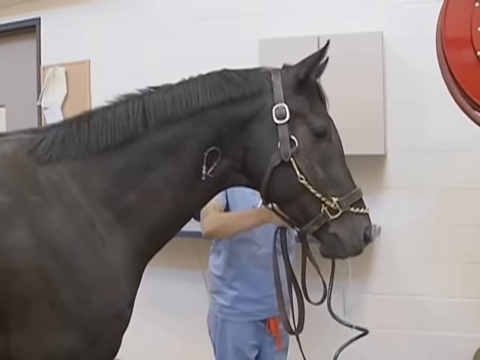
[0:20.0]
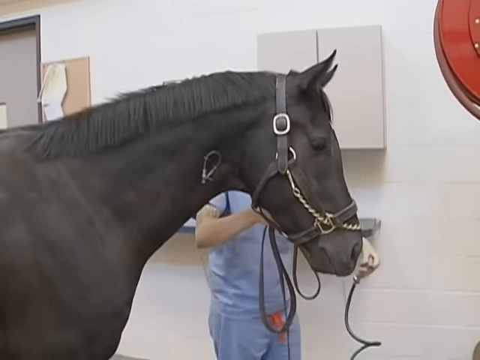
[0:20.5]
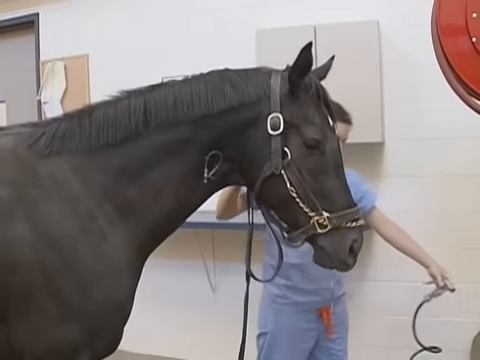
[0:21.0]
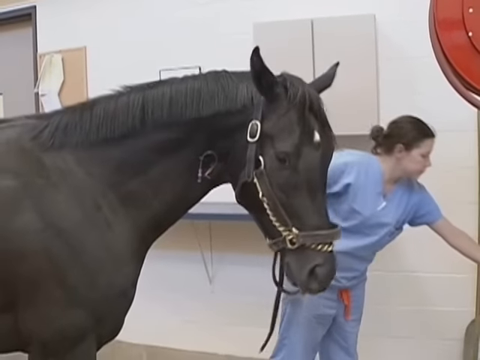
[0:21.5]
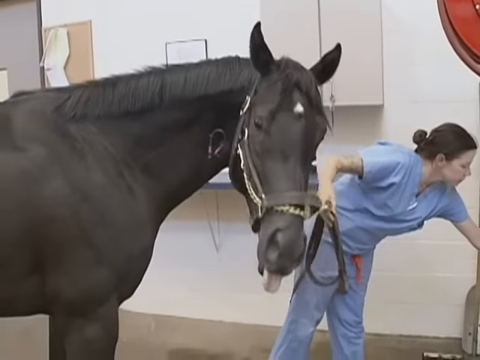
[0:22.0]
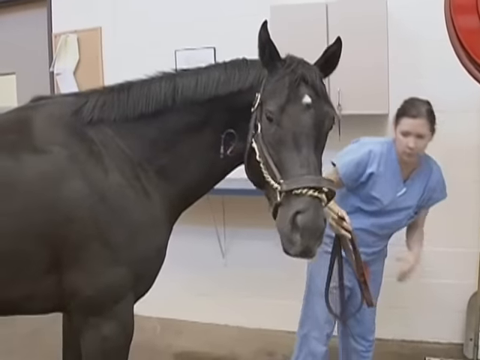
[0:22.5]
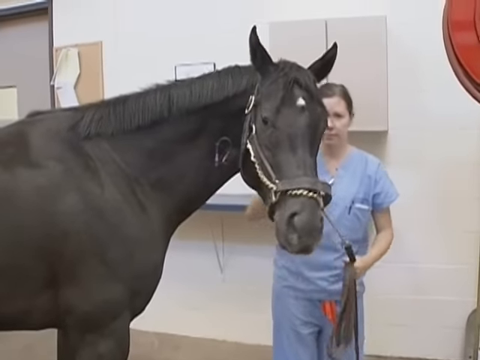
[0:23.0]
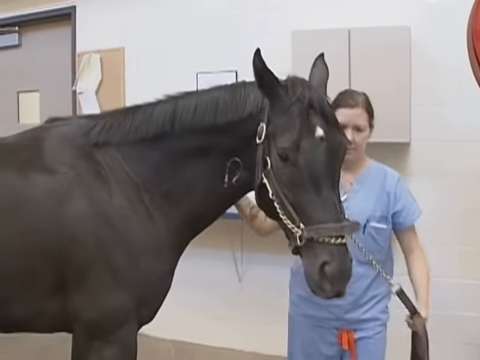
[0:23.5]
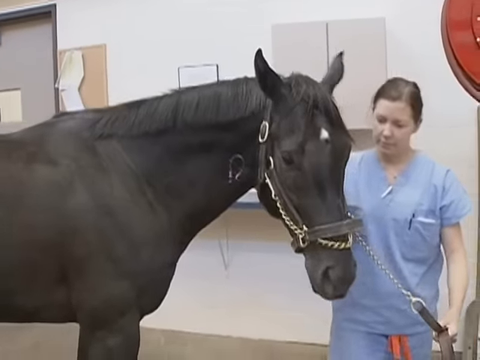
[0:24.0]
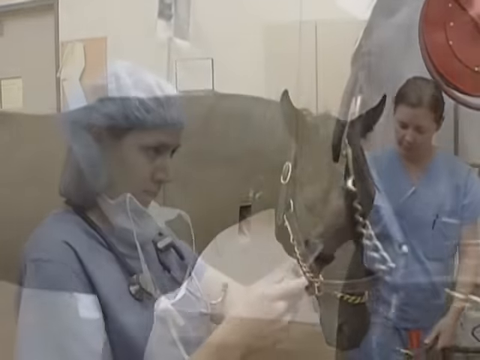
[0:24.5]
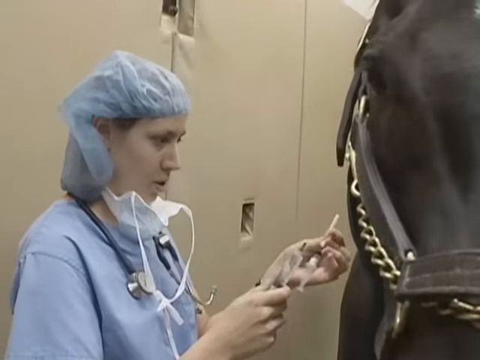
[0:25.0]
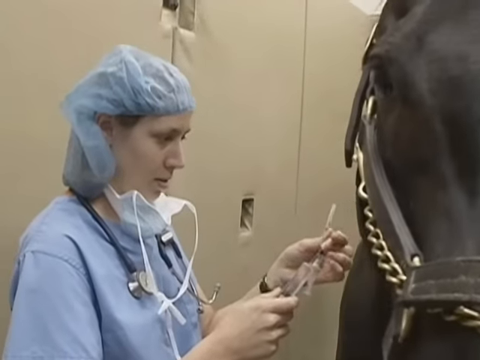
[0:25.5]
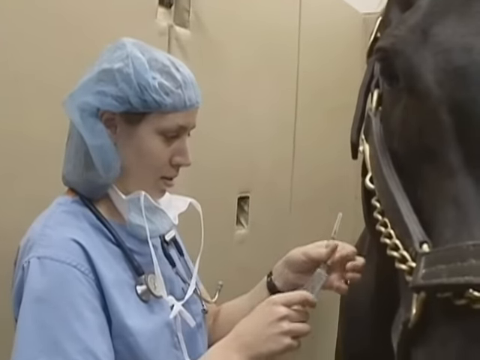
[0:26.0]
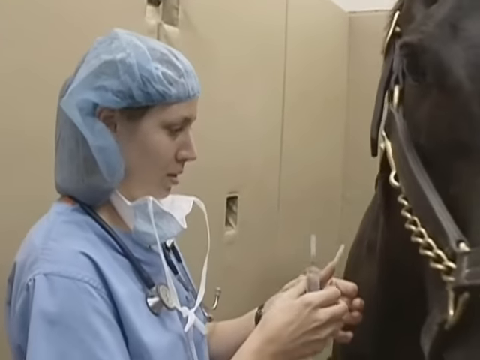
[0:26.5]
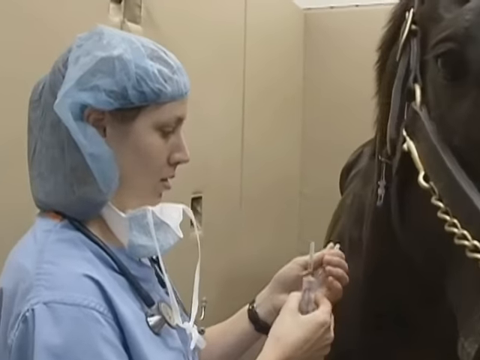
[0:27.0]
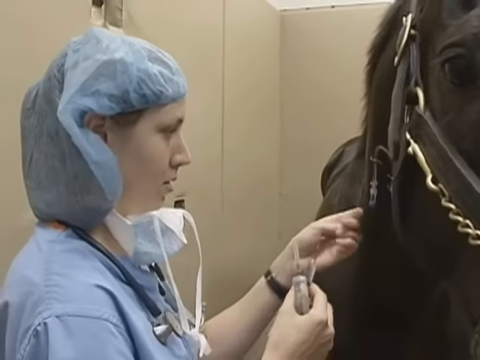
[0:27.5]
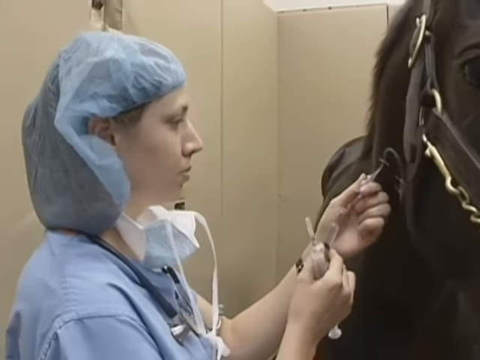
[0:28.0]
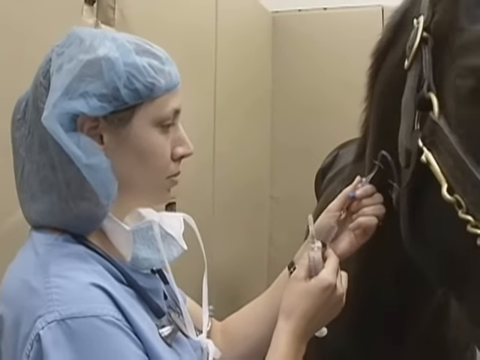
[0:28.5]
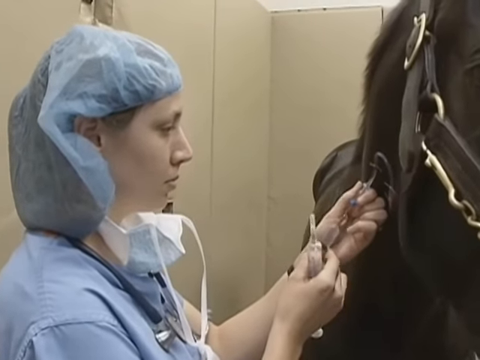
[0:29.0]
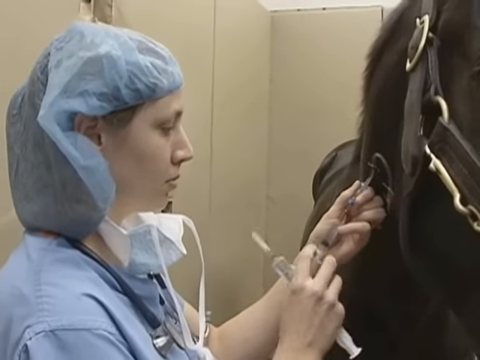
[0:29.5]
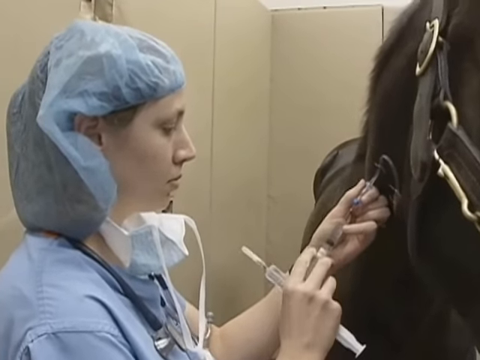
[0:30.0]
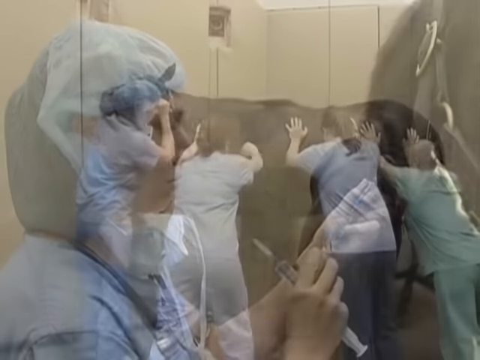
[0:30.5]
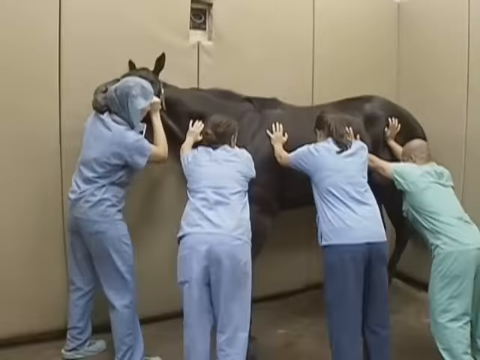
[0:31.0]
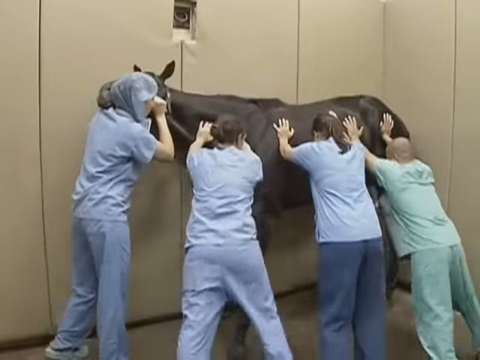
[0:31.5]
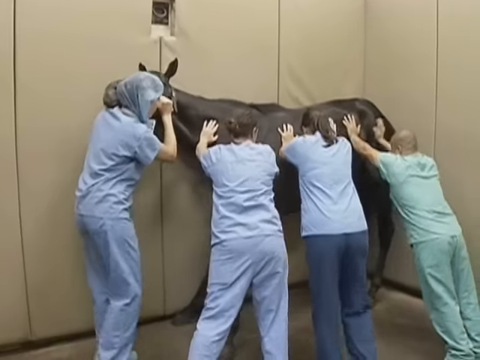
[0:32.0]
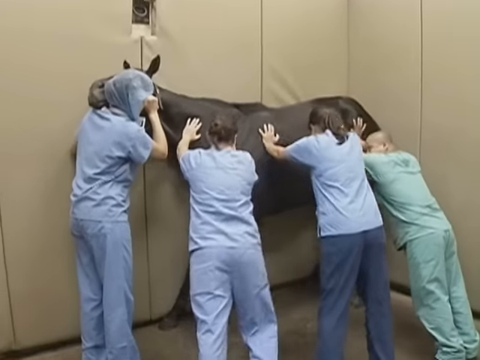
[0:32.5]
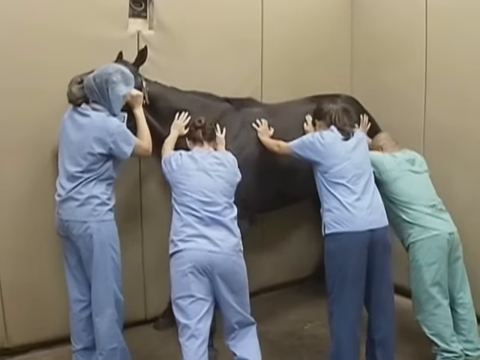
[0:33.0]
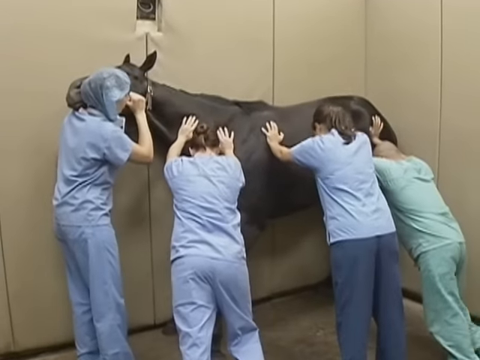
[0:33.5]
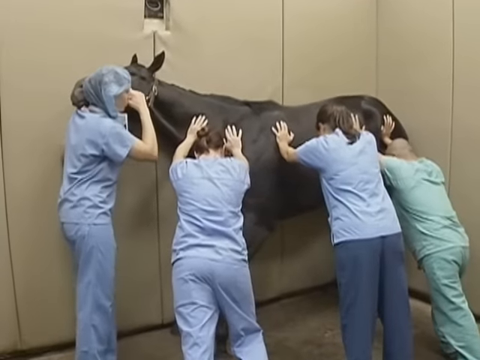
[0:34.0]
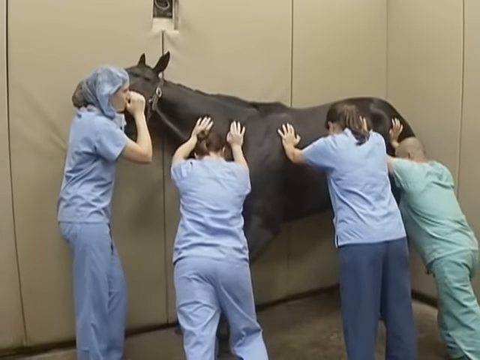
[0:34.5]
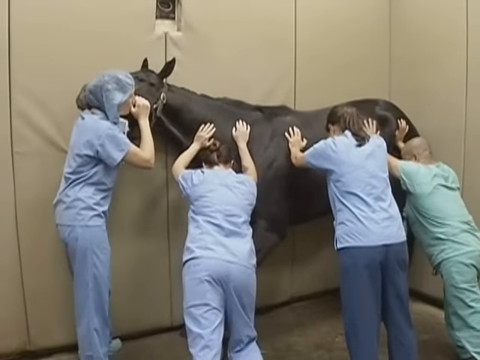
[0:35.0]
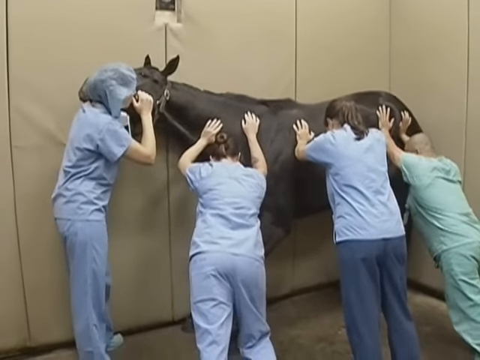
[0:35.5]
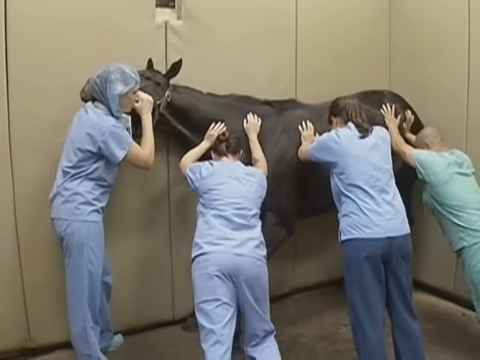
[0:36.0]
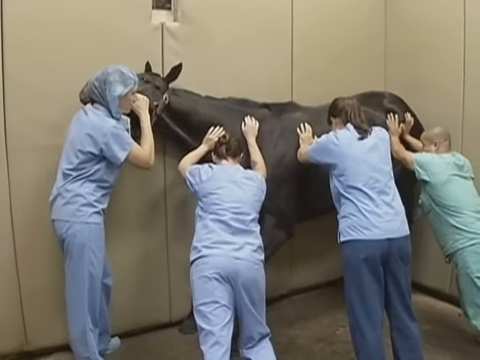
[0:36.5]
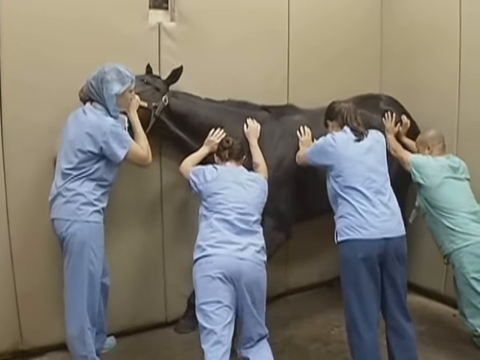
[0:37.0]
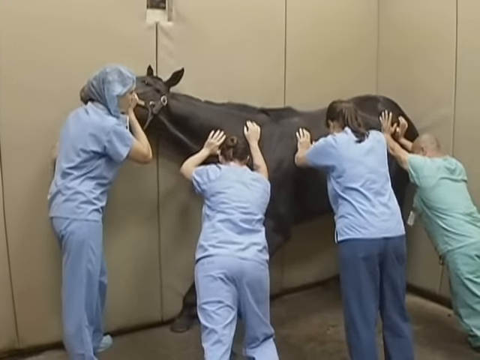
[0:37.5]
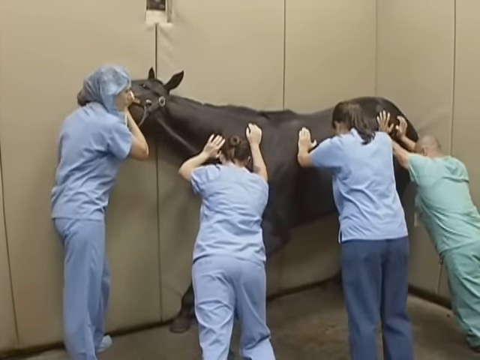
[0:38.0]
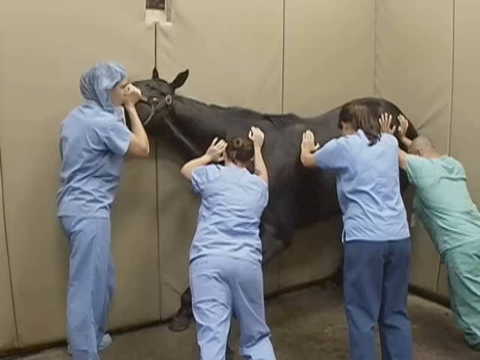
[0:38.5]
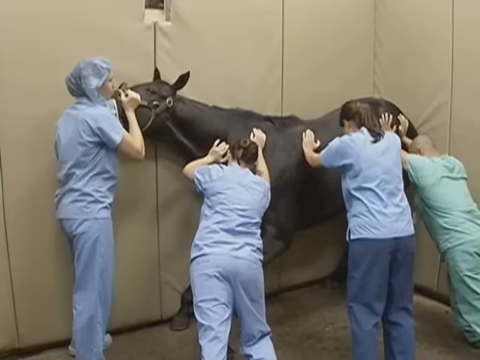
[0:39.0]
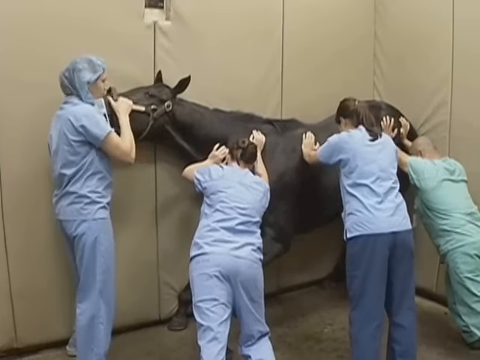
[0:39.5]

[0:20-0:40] The horse is in what looks to be a different room of the apparent veterinary clinic or hospital. The woman in scrubs holds the horse's reins, or possibly a leash, and leads the horse over. The horse is then in a different section of the room, with beige walls behind it. What looks like another veterinarian or veterinary tech is next to the horse, wearing a hair covering with a mask around their neck but not over their face; they have a syringe and inject something into the horse. Four people, three women and a man, then push the horse against the wall, possibly to hold it steady while it is being sedated. They appear to be using all their might, working as a team. The wall appears to be padded rather than a hard surface, and the horse's knees buckle ever so slightly.